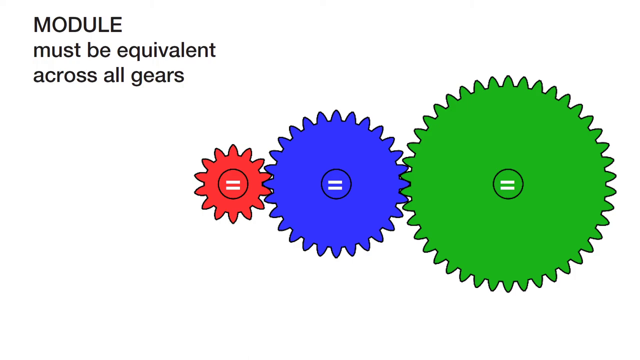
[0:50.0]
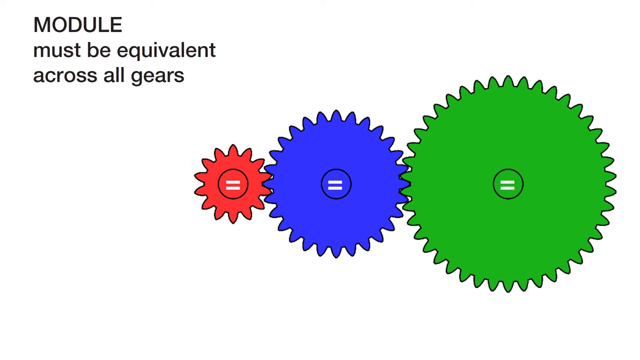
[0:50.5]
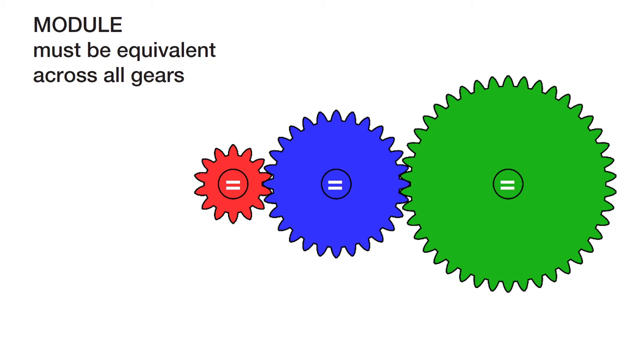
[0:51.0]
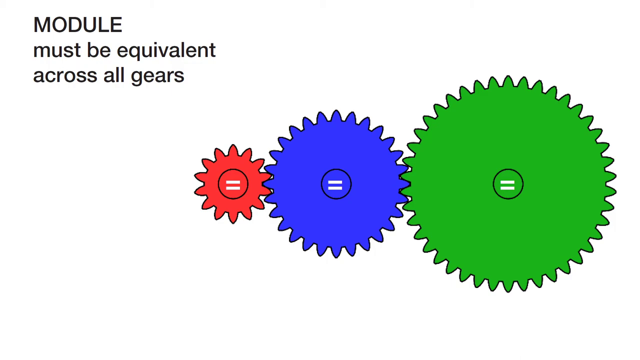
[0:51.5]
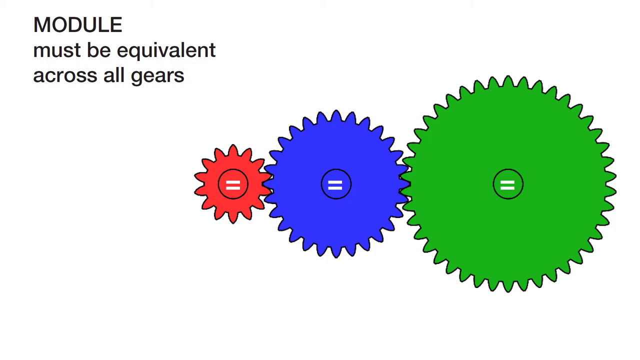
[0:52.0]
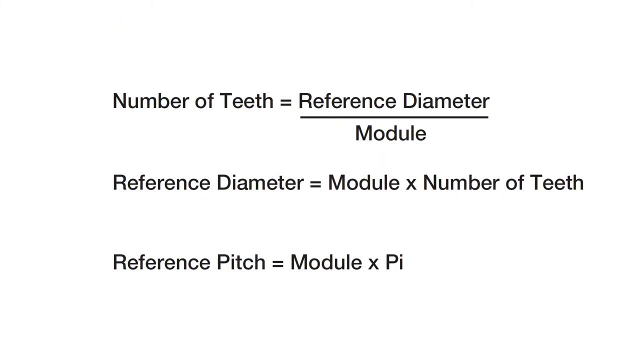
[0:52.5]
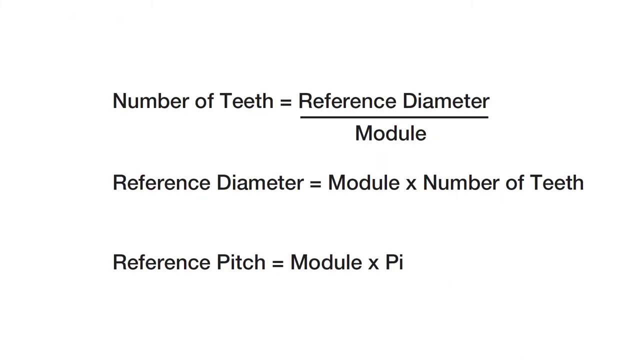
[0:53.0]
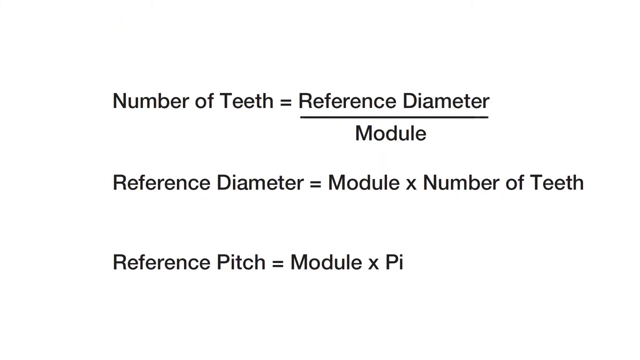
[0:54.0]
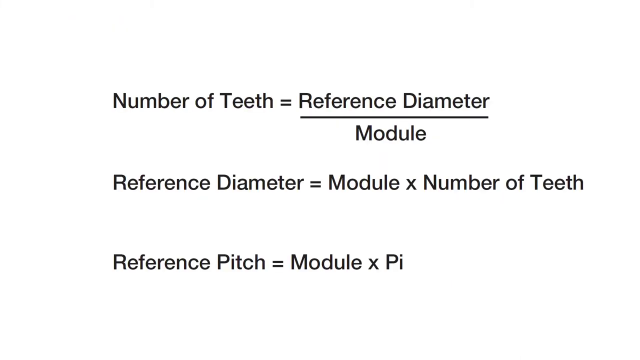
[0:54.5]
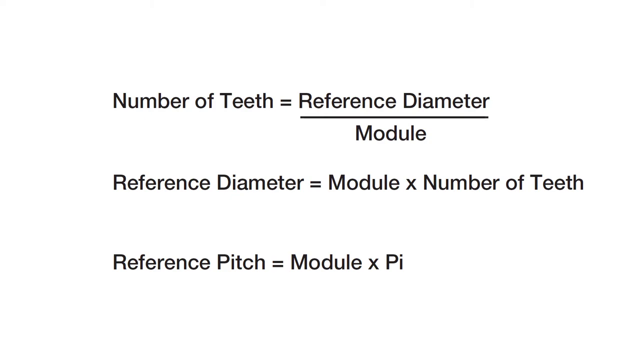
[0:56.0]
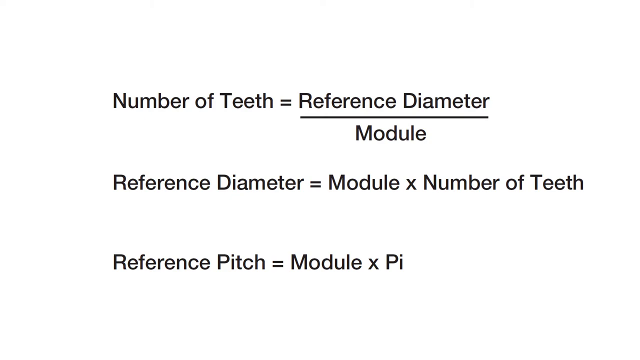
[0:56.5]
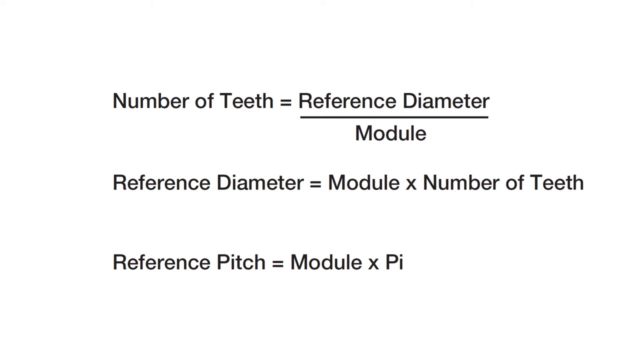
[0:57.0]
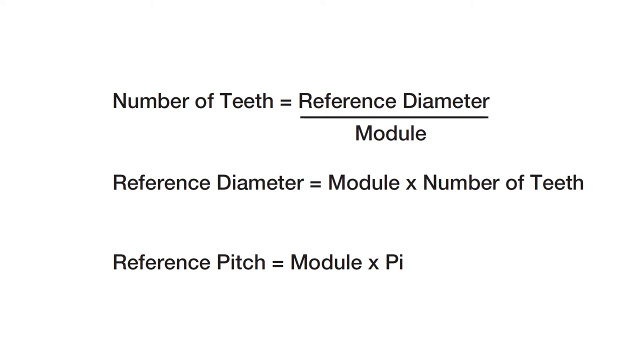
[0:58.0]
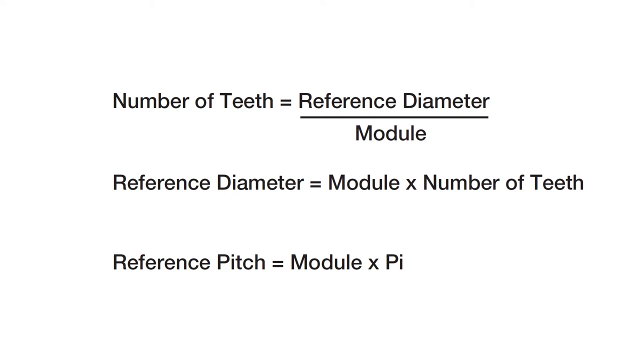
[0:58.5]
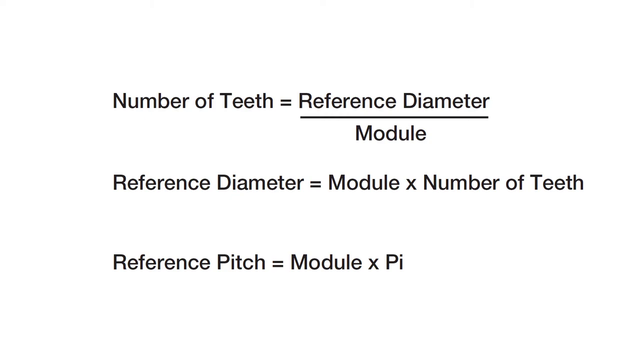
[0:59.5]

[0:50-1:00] The screen stays the same, with black text in the top left reading "module must be equivalent across all gears" and the three gears in the middle: the smallest red gear, the medium-sized blue gear and the largest green gear, each with an equals sign in its middle. The video then cuts to a new section, a completely white screen with three sections of black text. One reads "number of teeth equals reference diameter divided by module", another reads "reference diameter equals module multiplied by number of teeth", and the last, at the bottom, reads "reference pitch equals module multiplied by PI". These three sections remain in black text in the middle of the white screen.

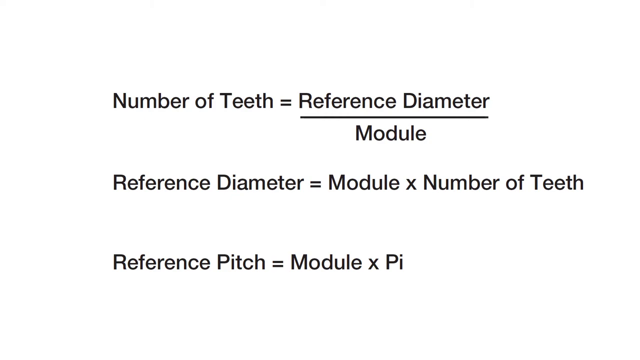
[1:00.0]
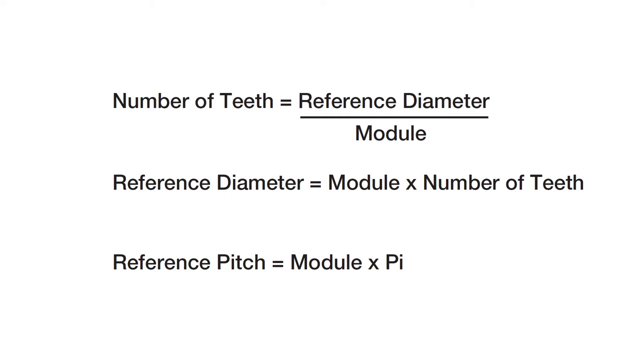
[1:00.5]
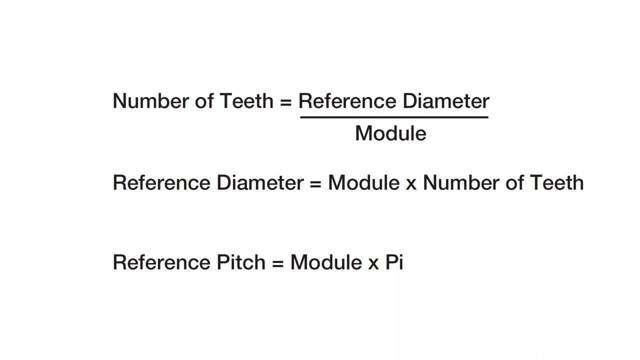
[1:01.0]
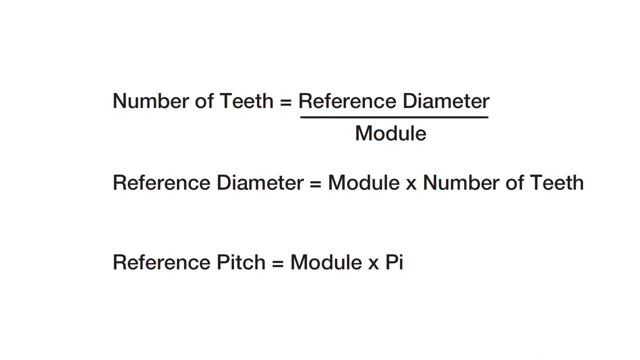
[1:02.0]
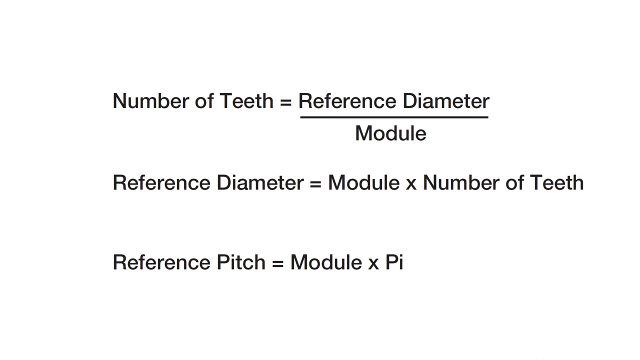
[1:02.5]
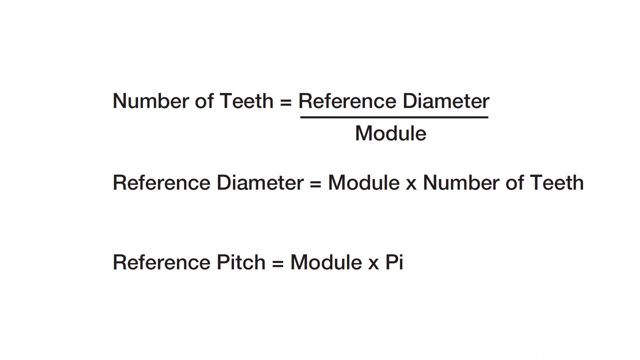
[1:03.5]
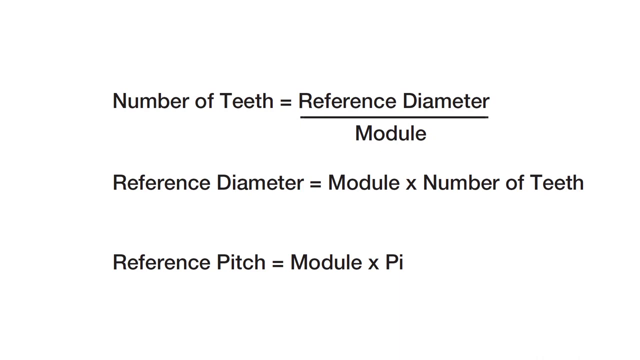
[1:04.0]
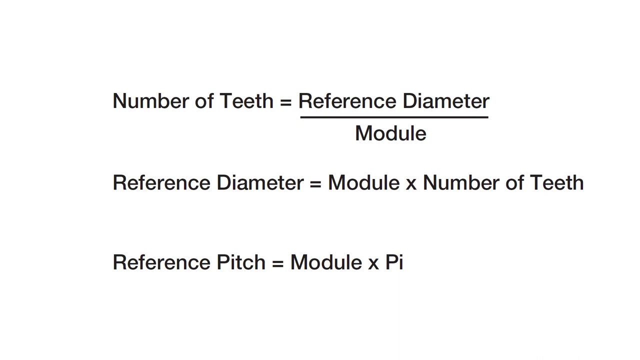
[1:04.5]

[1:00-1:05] The same screen remains, with white blank space taking up most of it and three sections of black text in the middle: "number of teeth equals reference diameter divided by module", "reference diameter equals module multiplied by number of teeth" and "reference pitch equals module multiplied by PI". Everything else is white, and the screen stays unchanged until the video ends.